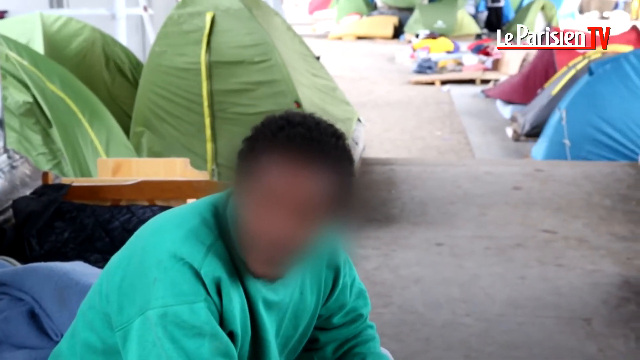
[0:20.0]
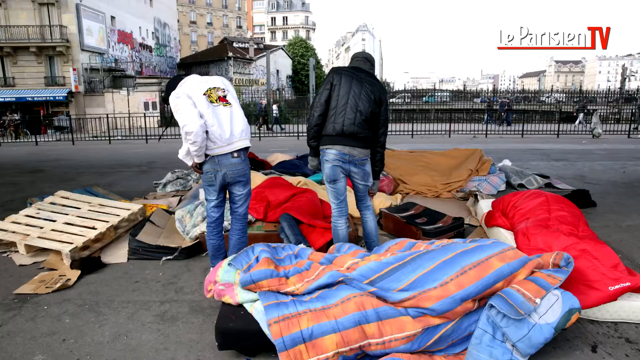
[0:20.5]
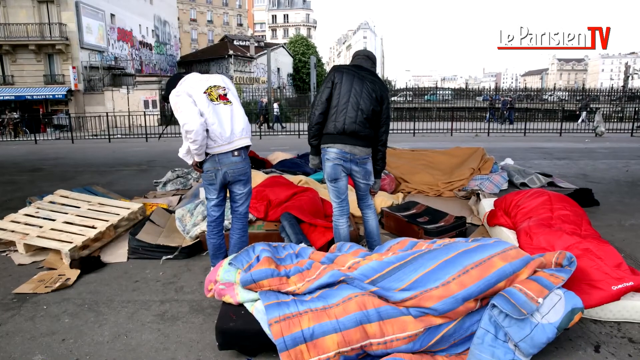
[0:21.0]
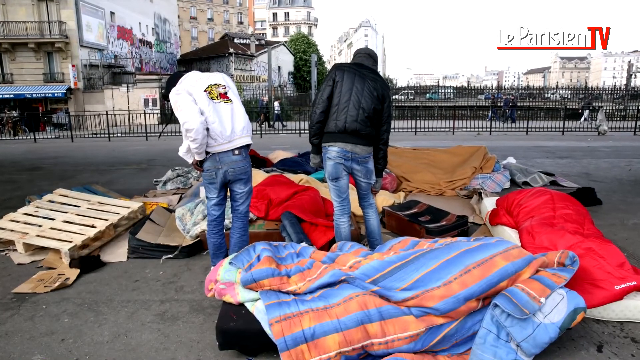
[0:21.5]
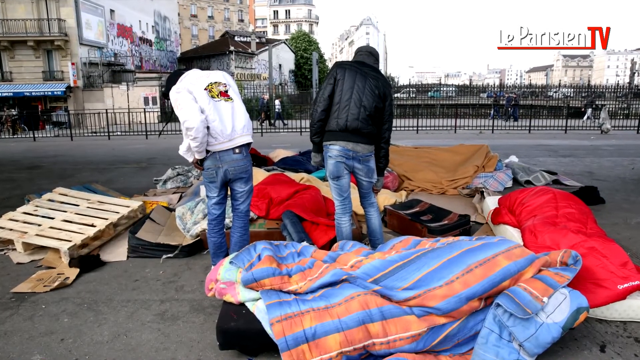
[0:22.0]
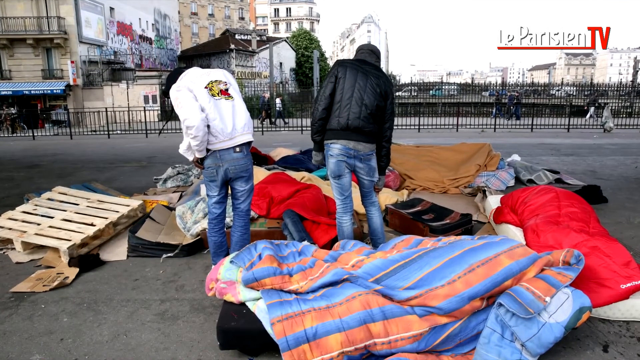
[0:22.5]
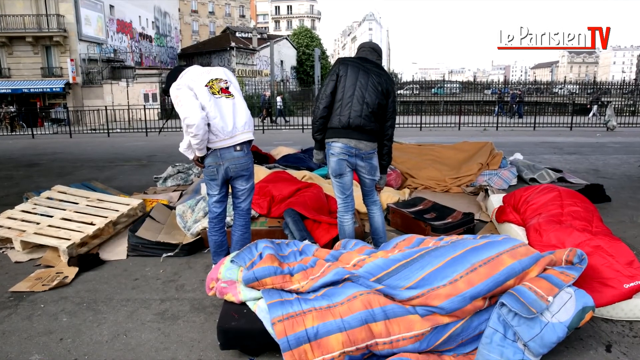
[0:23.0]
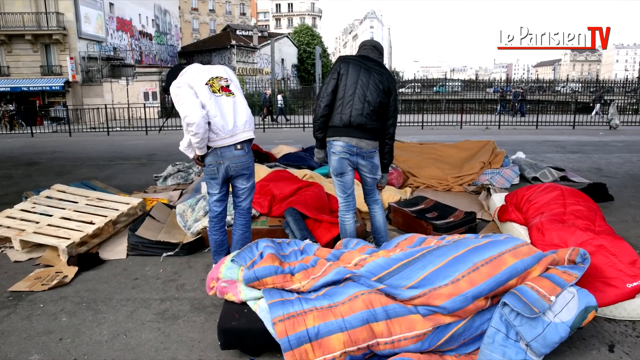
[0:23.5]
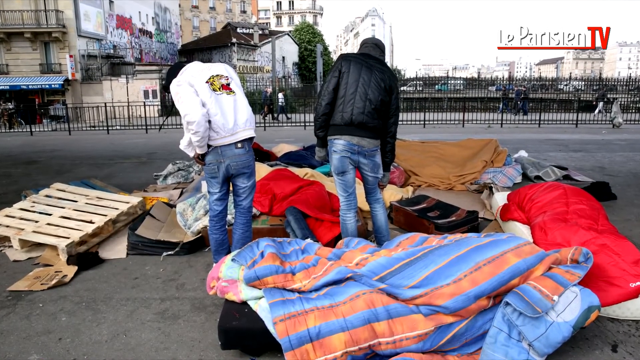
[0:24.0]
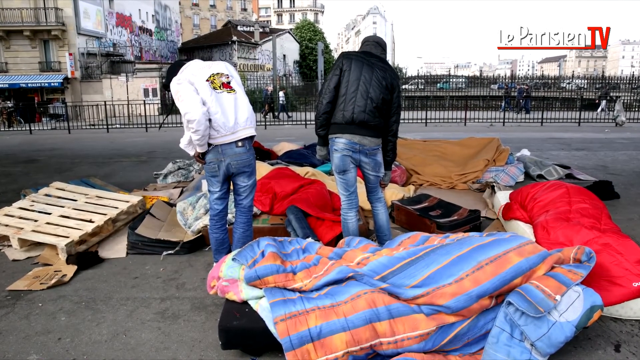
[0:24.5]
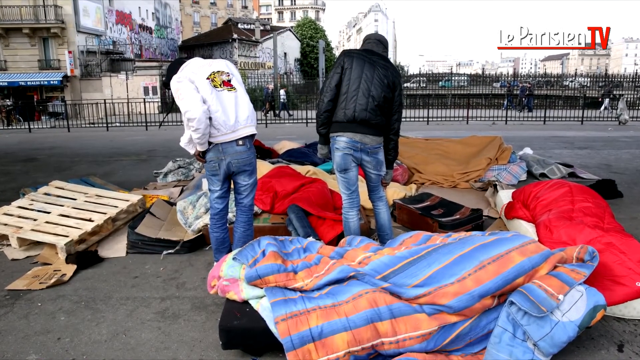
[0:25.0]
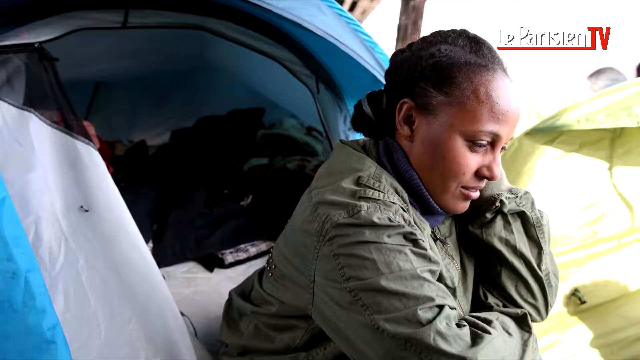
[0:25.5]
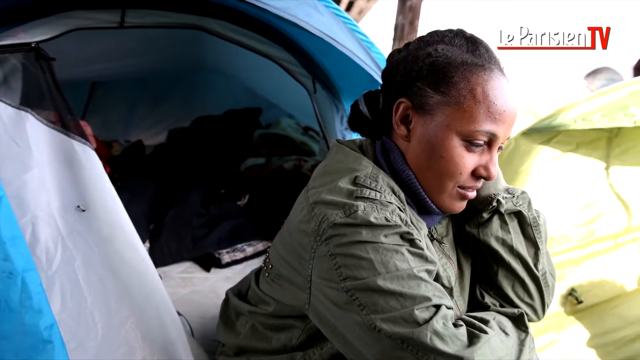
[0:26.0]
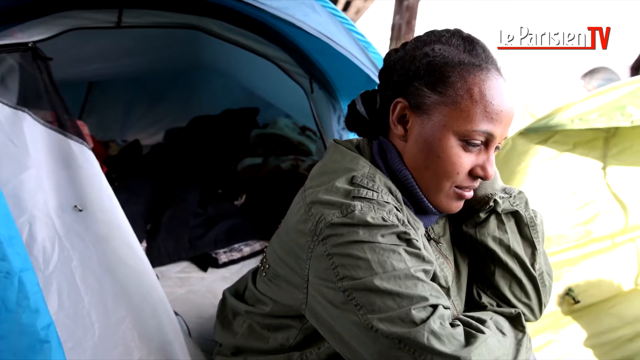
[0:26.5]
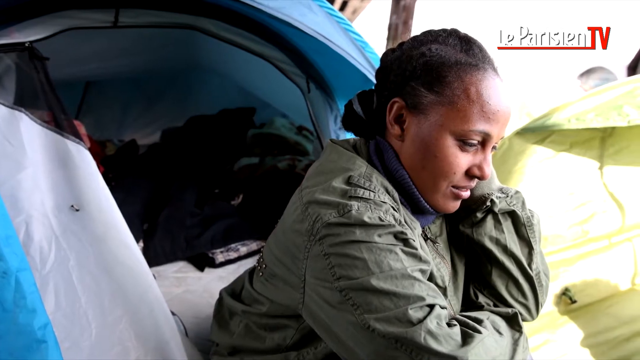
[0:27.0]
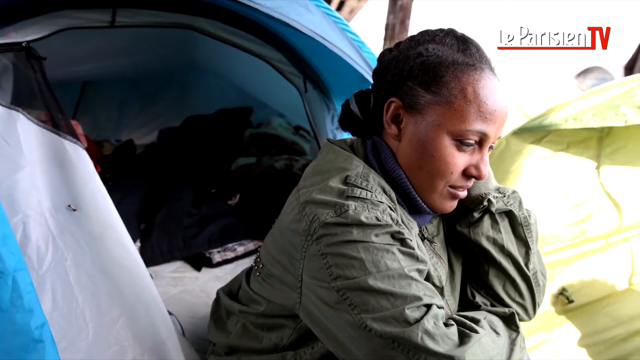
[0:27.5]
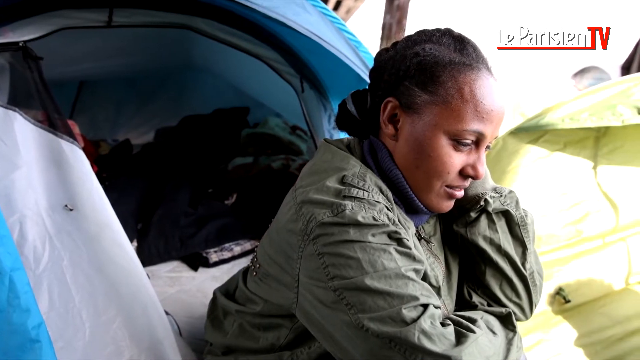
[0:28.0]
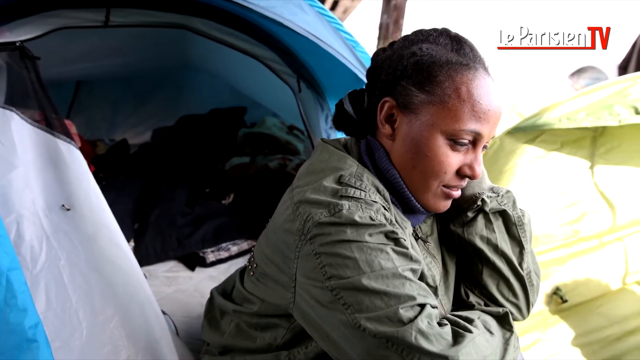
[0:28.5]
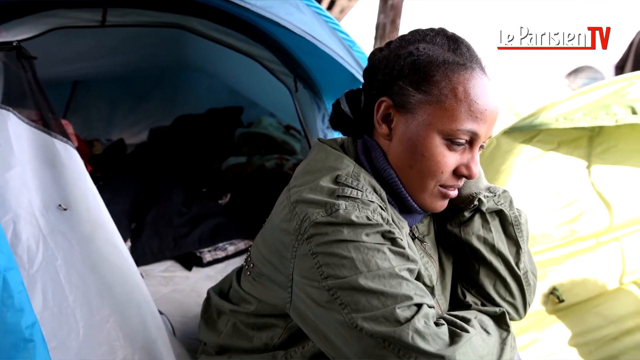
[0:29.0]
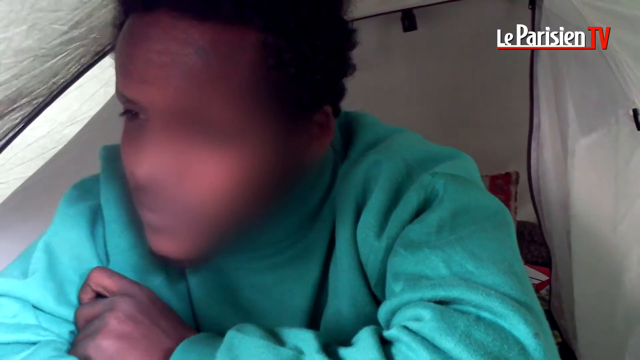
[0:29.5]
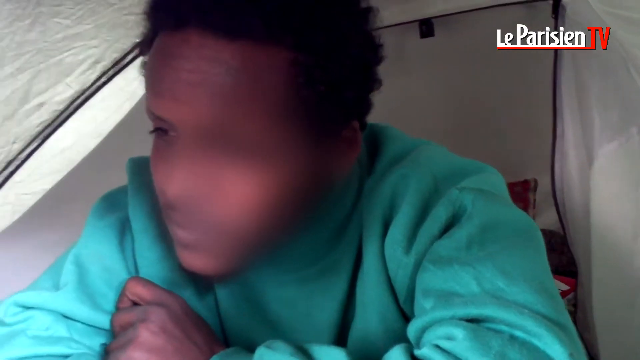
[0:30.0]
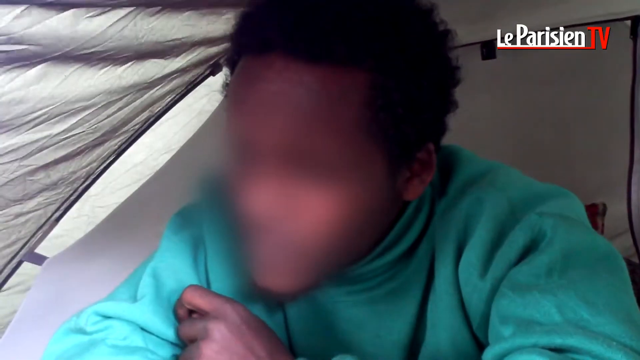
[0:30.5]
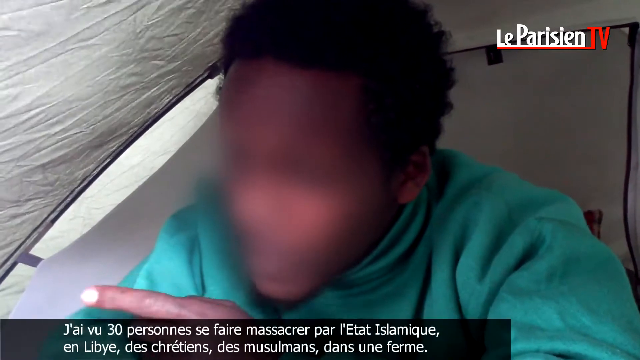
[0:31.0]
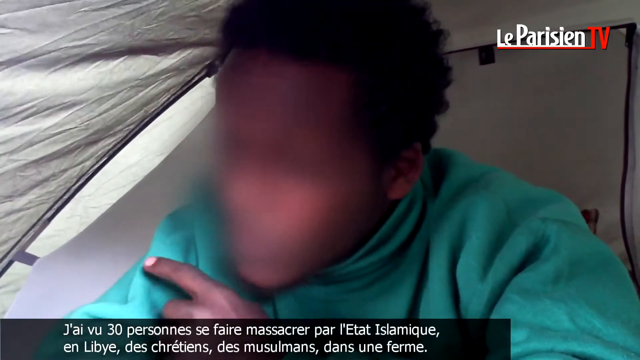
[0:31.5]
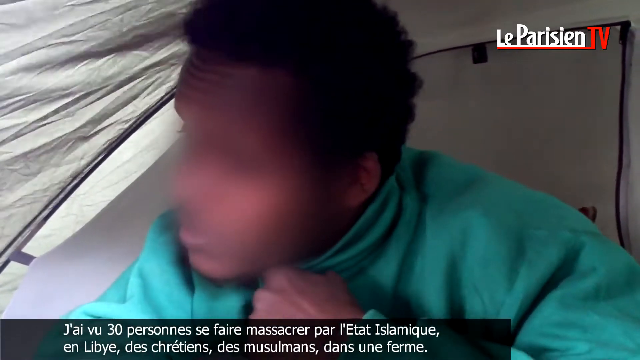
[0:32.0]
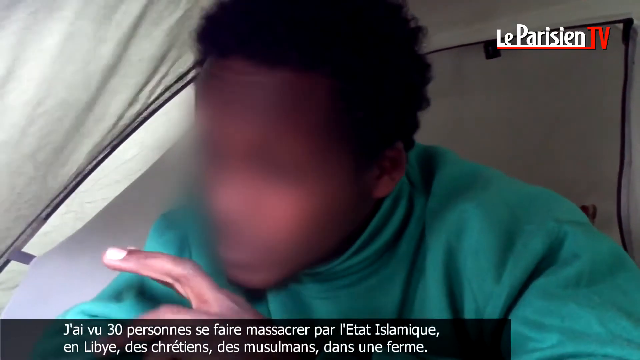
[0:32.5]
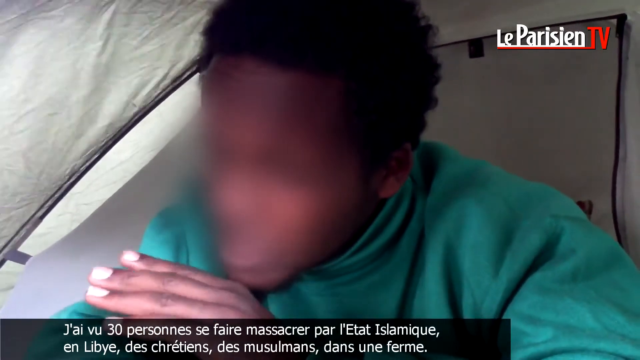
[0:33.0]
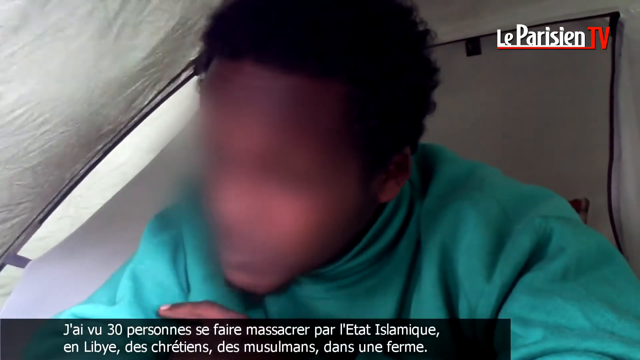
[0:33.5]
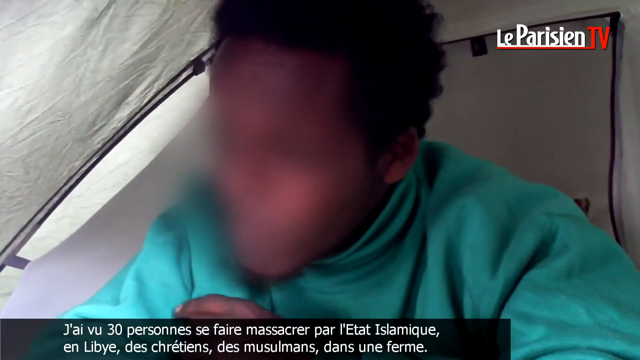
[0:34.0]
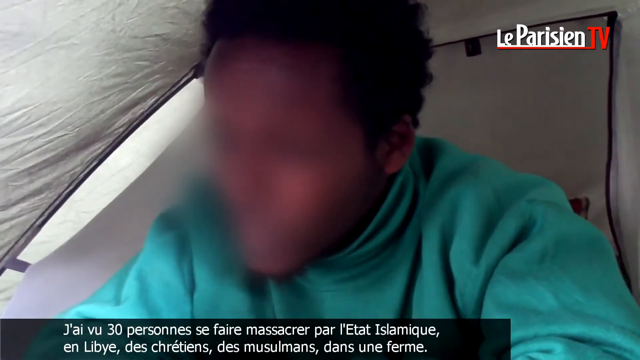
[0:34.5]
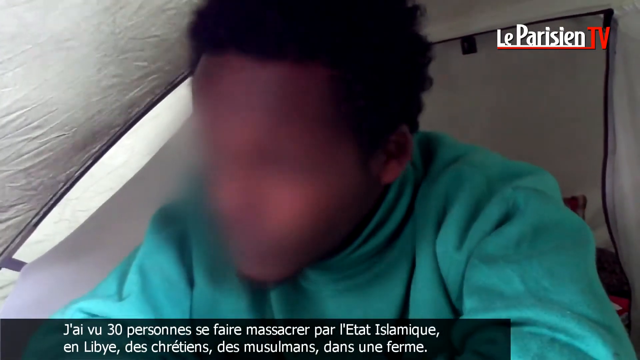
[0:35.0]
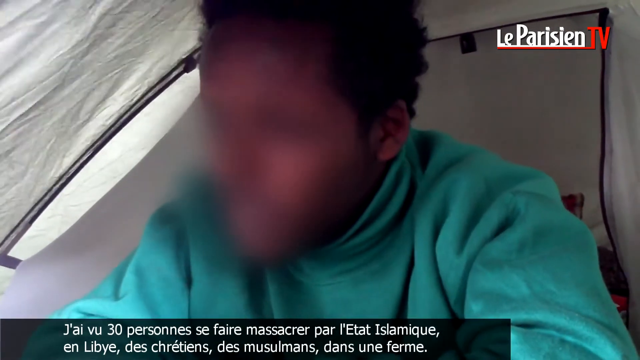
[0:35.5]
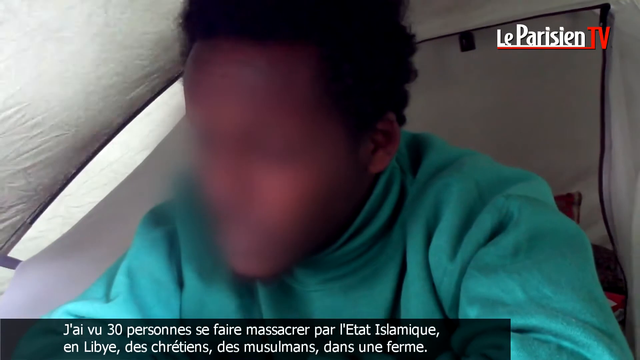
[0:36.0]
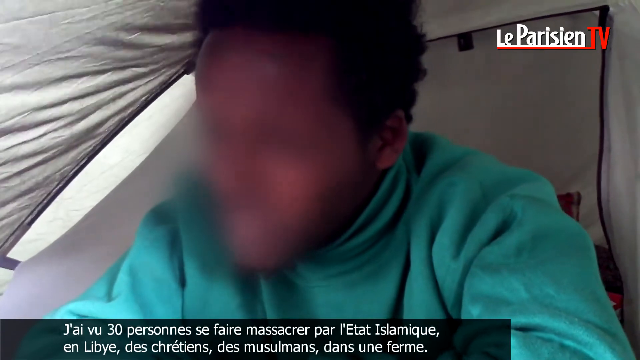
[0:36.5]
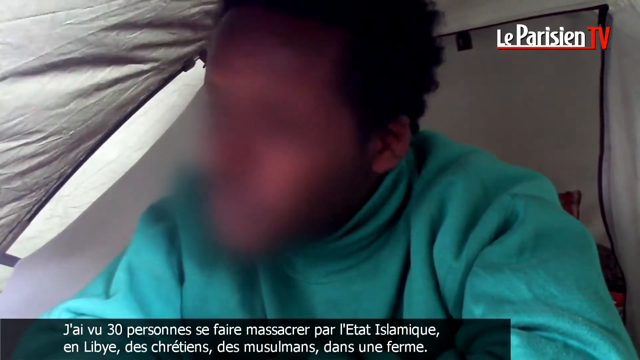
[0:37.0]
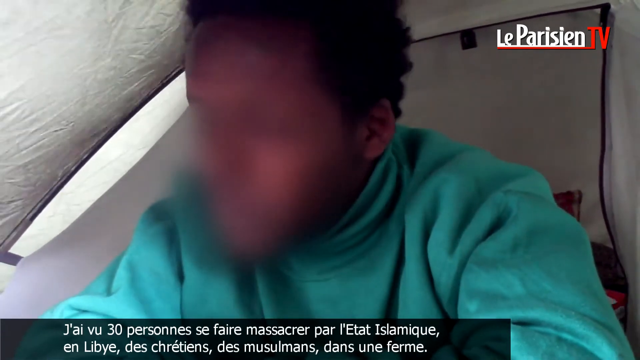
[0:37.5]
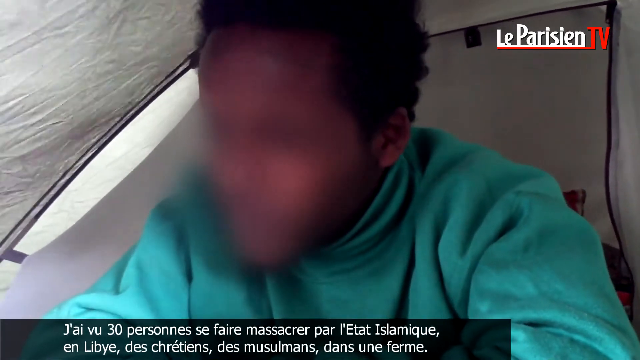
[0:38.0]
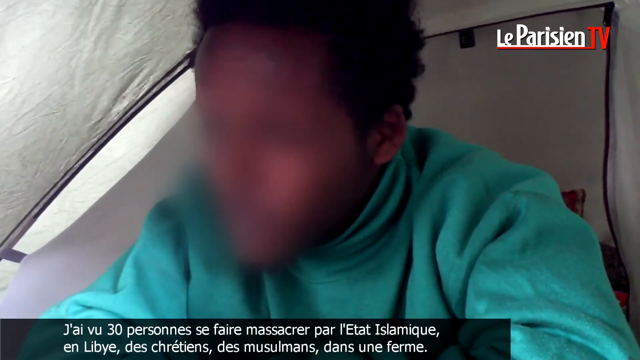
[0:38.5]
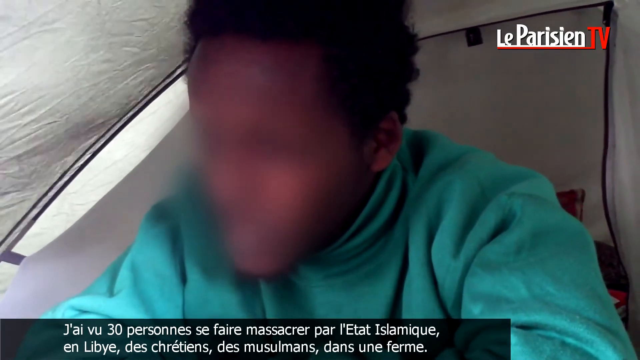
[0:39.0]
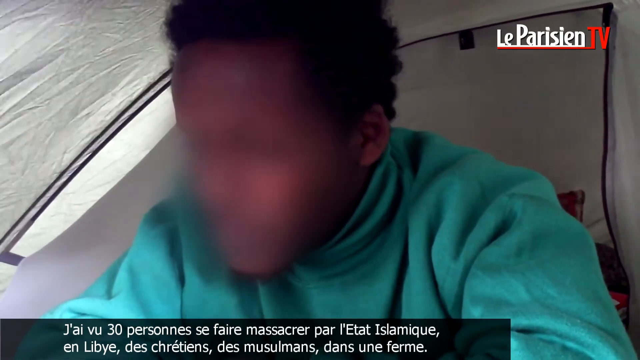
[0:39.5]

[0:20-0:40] Another scene shows two people standing over a lot of items on the floor. At the very left is a wooden pallet board, and there seem to be broken-down tents or broken blankets, along with cardboard pieces, on the floor. The two people have their backs to the camera and are kind of hunched over, looking through the items. Both wear blue jeans. The one on the very left wears a long-sleeve shirt with a design on the back of what seems to be a dog or a lion with its tongue out, and the one on the right wears a long-sleeved black coat. It is a still picture that the camera zooms in on slowly. The next picture shows a woman sitting in front of her tent. The video then returns to the curly-haired man at his tent as he speaks. Wind is hitting the tent, and from the inside the tent looks a little gray.